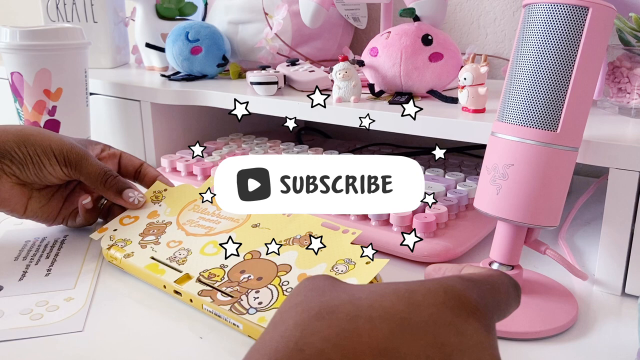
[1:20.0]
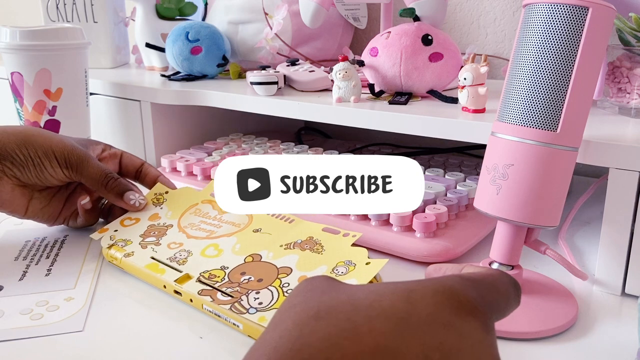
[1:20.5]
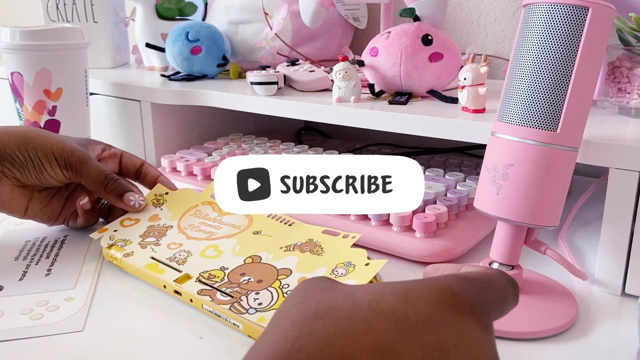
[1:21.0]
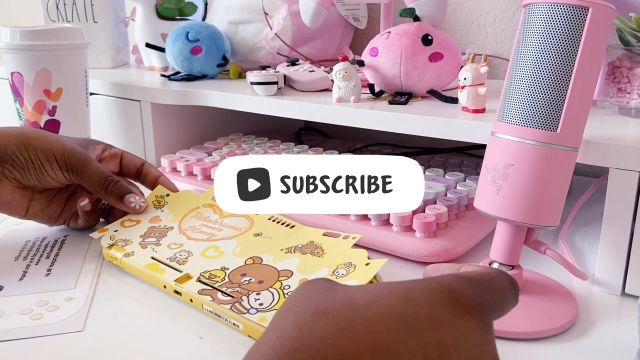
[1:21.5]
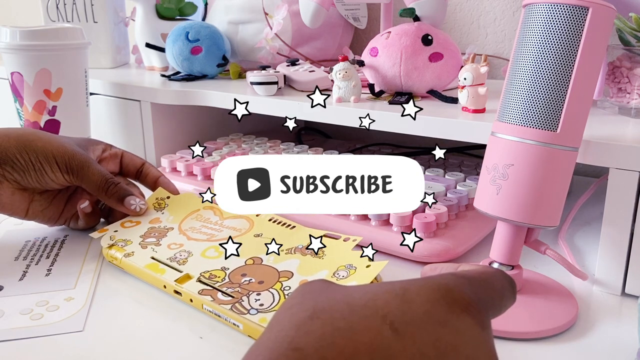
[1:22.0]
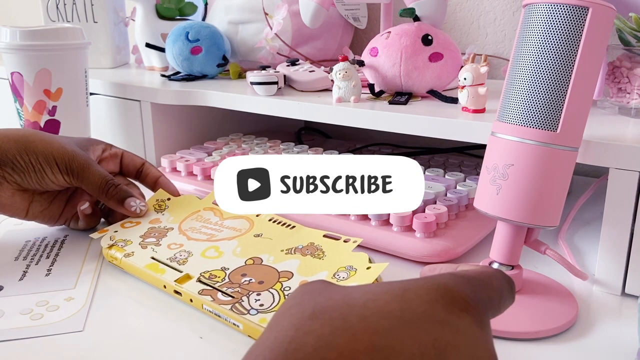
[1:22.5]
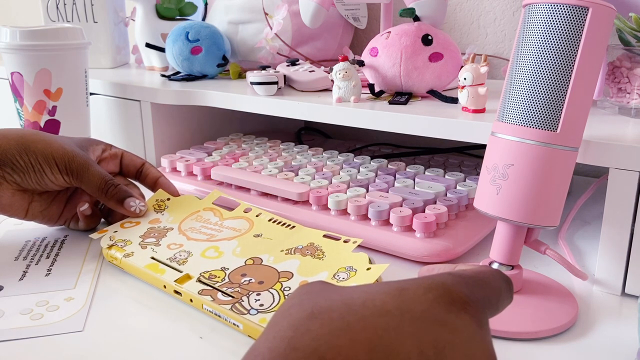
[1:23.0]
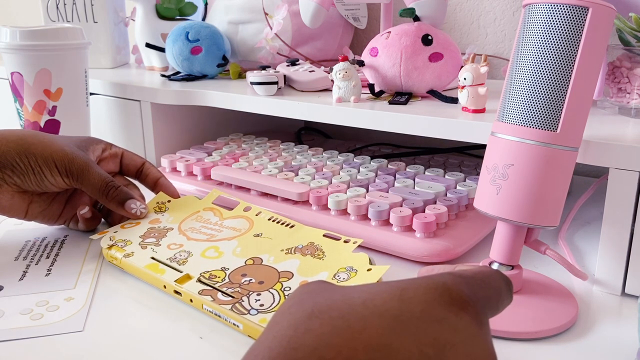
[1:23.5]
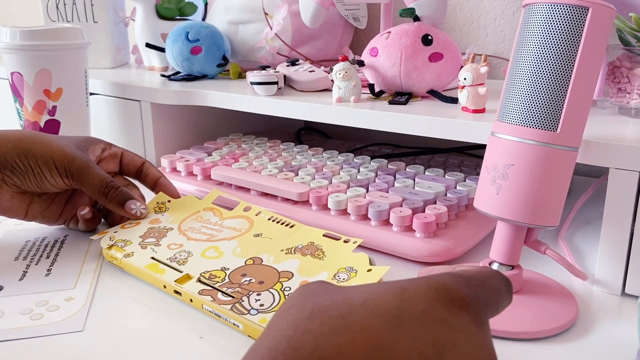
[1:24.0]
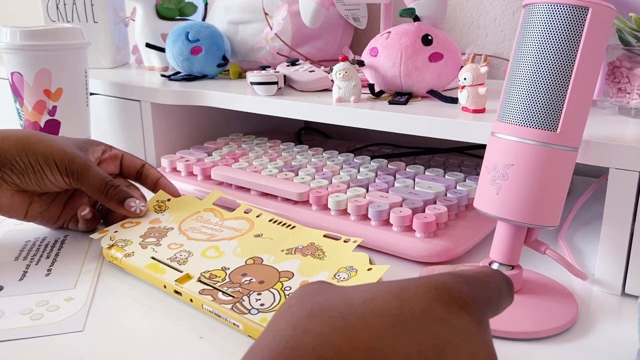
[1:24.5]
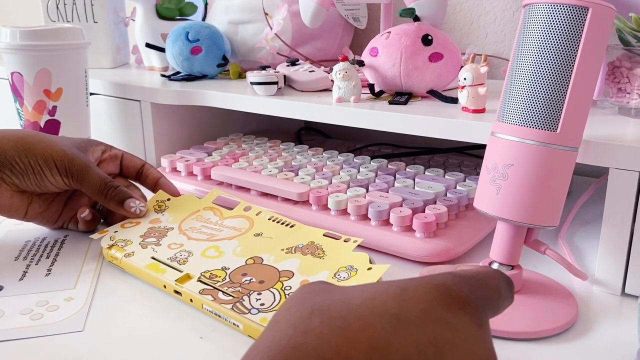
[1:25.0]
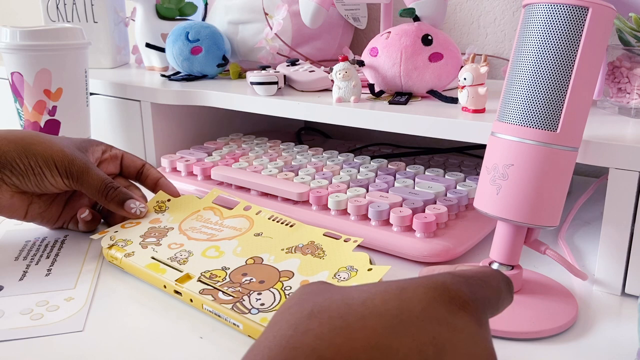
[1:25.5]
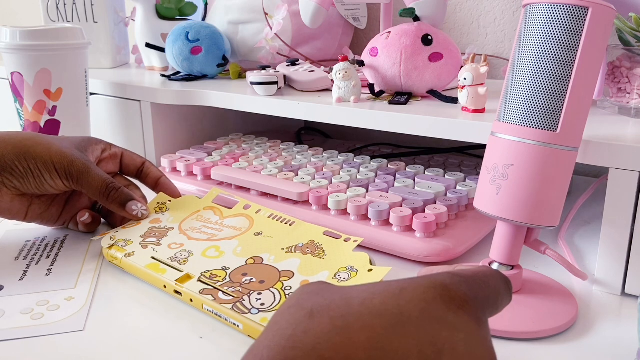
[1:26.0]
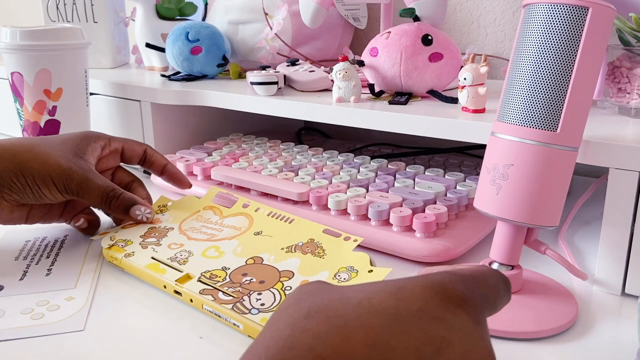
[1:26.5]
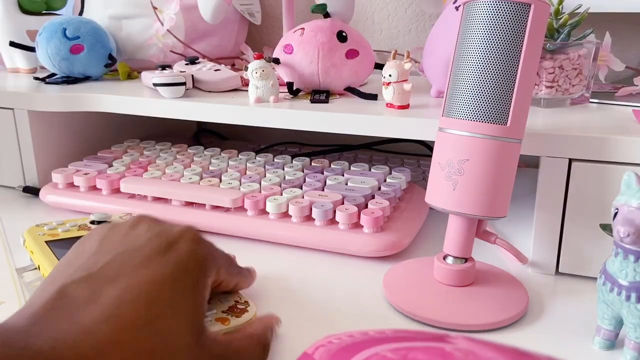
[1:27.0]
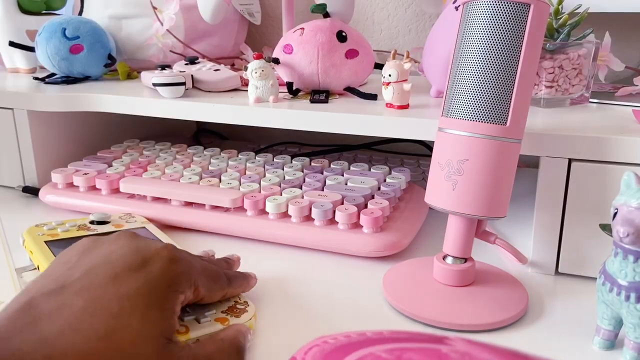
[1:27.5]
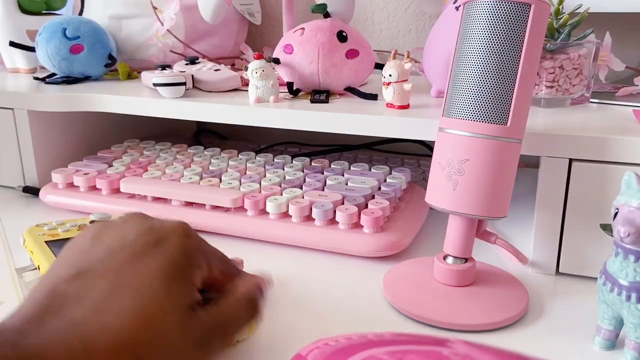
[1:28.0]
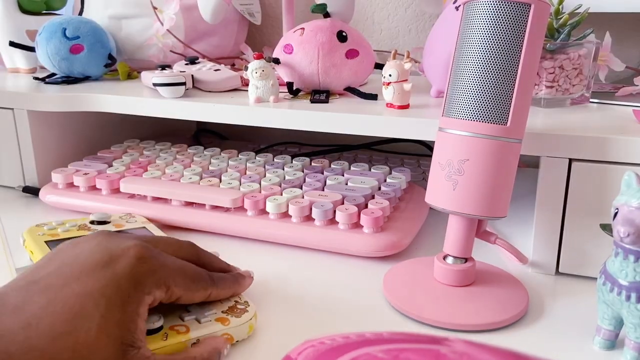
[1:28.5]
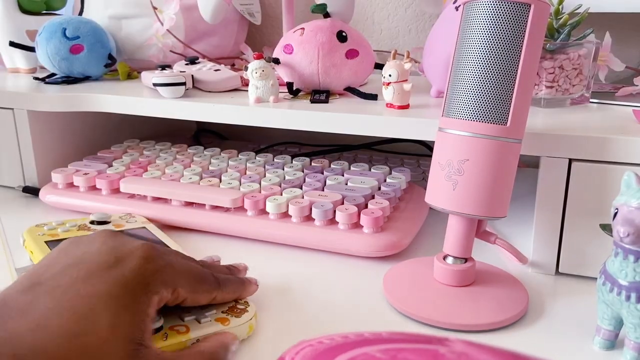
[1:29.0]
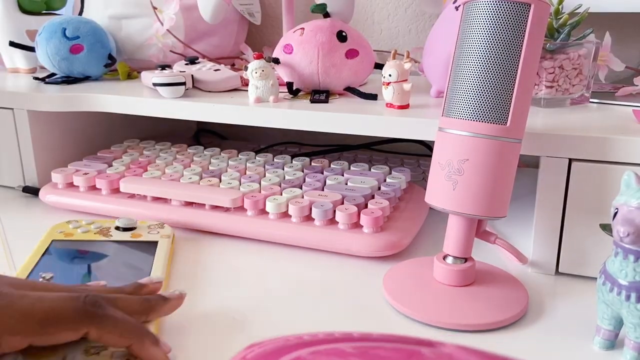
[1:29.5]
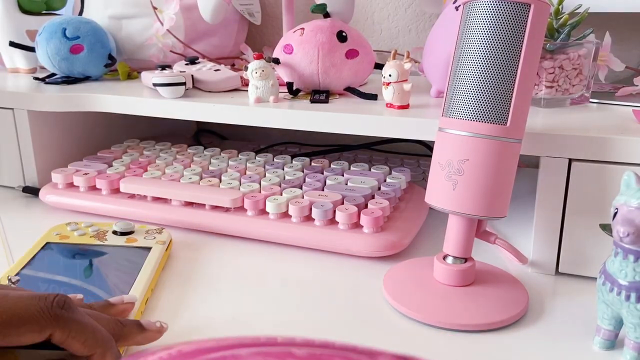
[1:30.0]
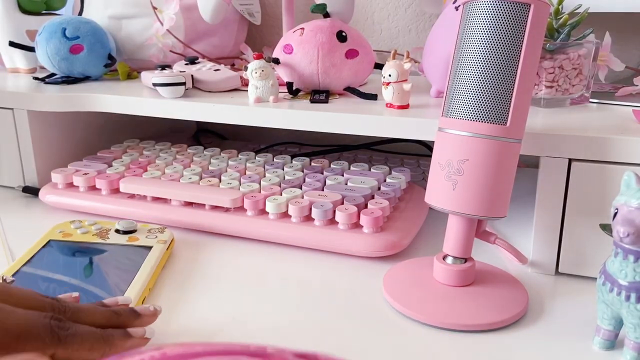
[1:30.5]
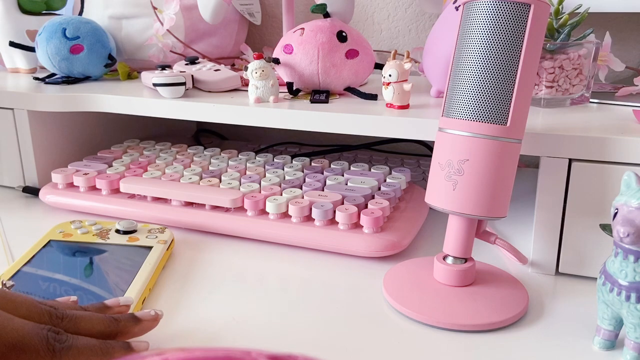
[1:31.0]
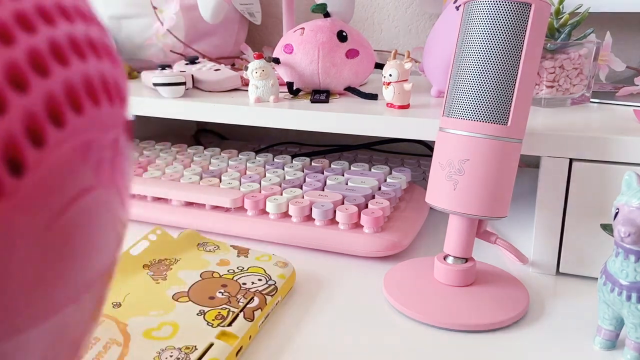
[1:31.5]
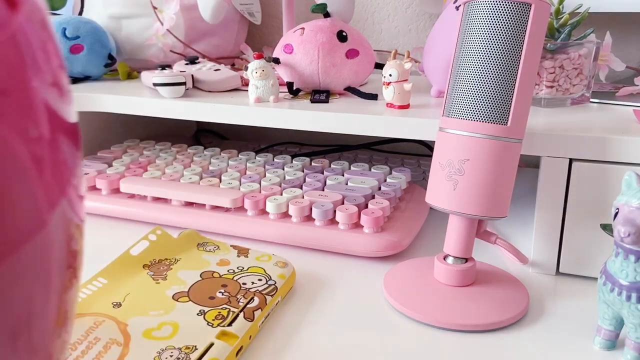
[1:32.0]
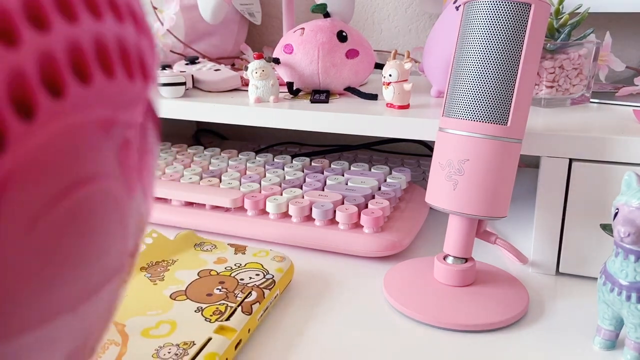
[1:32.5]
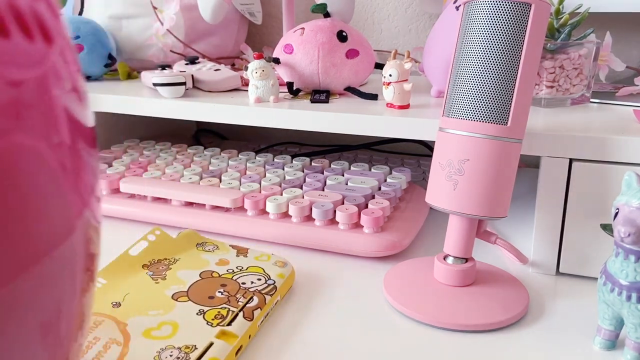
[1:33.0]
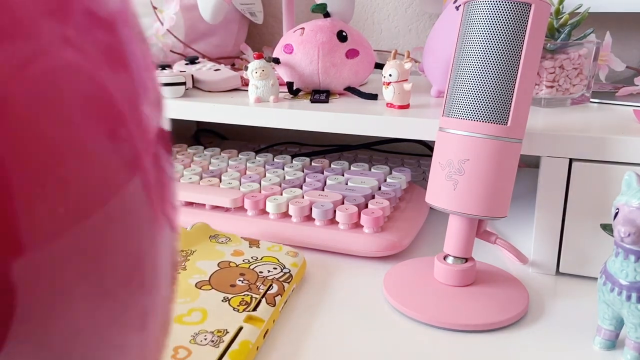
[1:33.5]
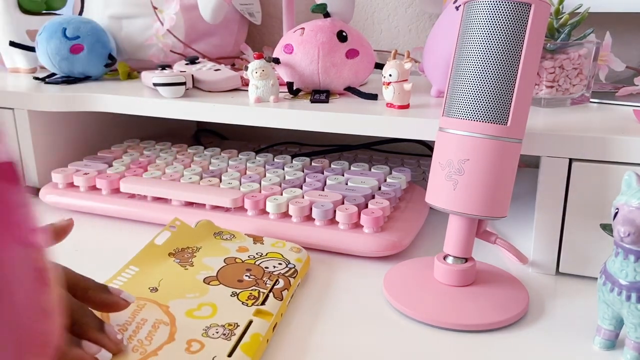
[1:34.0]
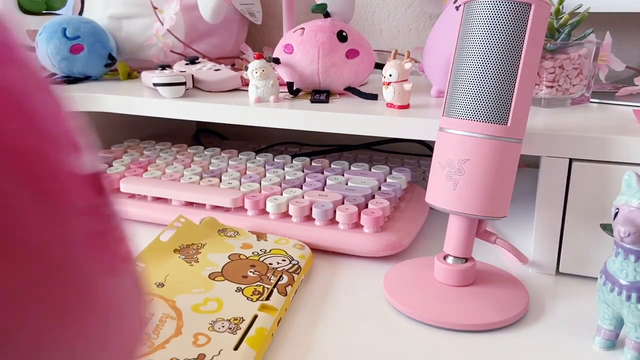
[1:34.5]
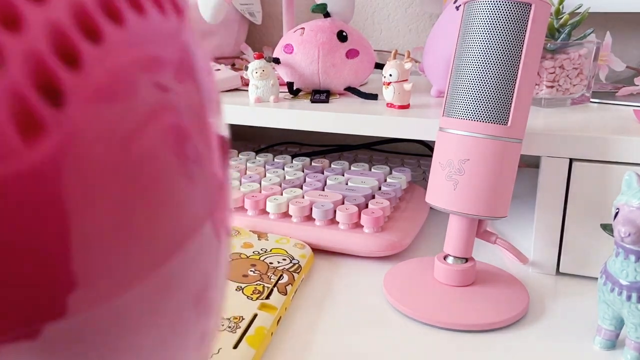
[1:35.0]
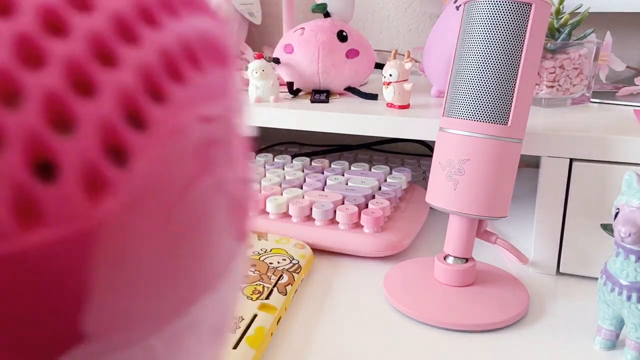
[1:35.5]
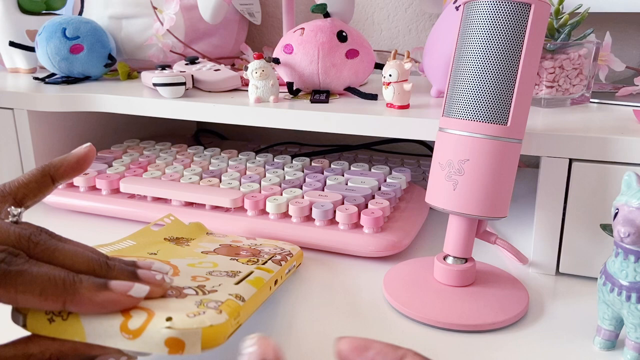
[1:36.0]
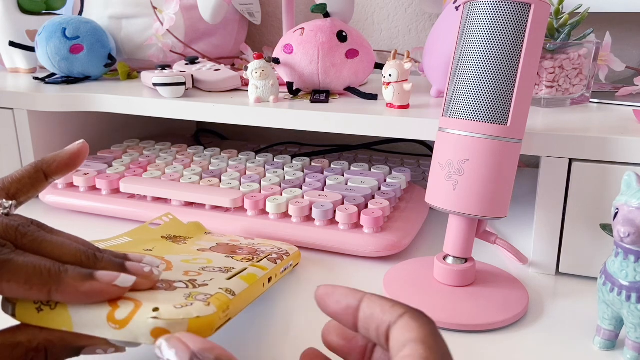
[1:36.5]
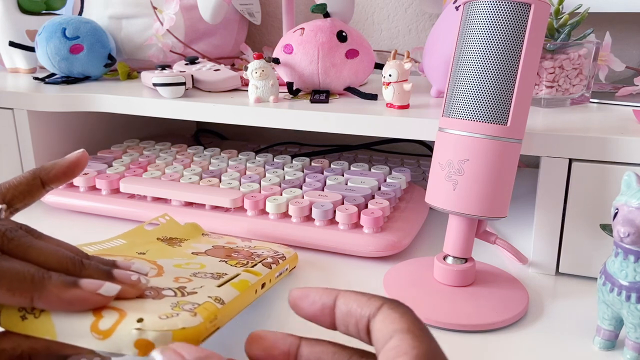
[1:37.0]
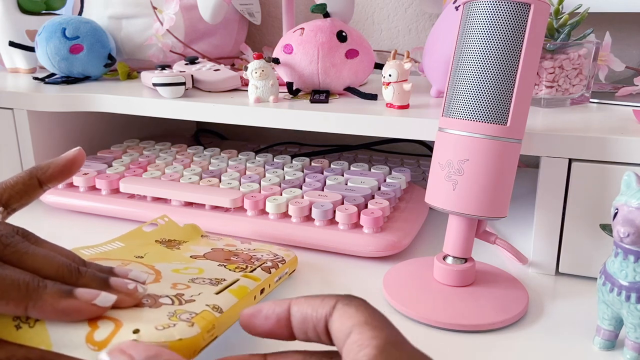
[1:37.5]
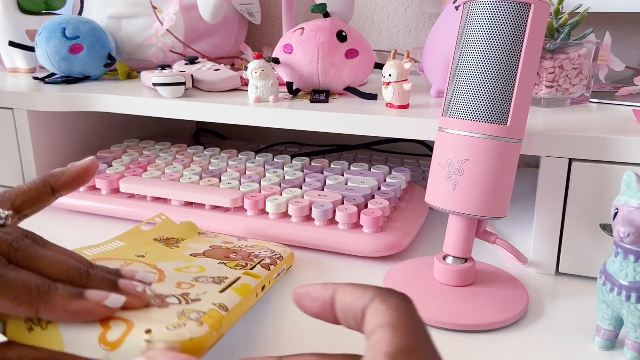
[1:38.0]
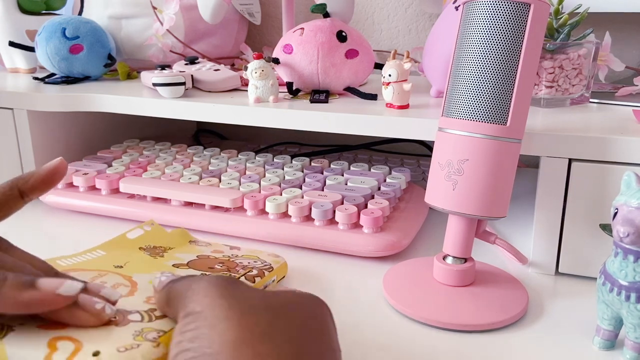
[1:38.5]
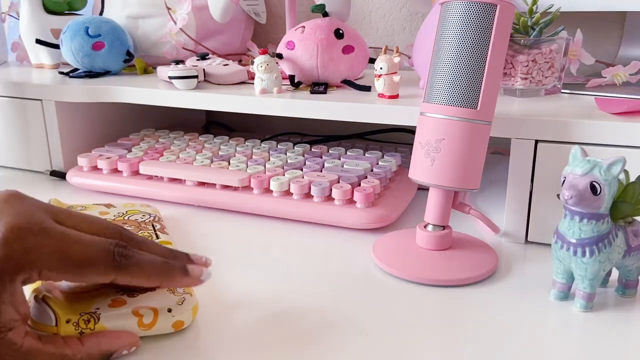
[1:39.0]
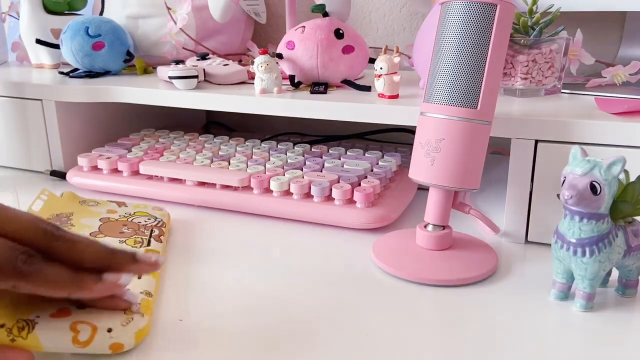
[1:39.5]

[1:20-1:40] A moving graphic appears overlaid in the center of the screen: a white rectangle with rounded corners containing a black and white graphic on the left and black writing on the right. Around the graphic, some black and white stars appear for a few moments. Next, two hands place a sheet of colored paper on a yellow console positioned on a white surface. In the following shot, a magenta object appears in the left part of the frame and then disappears, moving to the left. The yellow console is then shown rotated and moved to the left part of the frame. In the background various objects are on a white shelf, one of them a keyboard with round pink, white and purple keys.